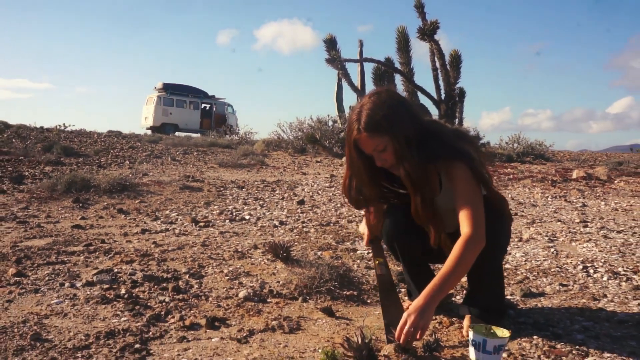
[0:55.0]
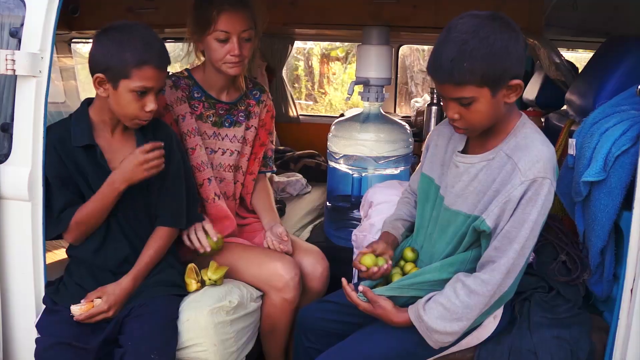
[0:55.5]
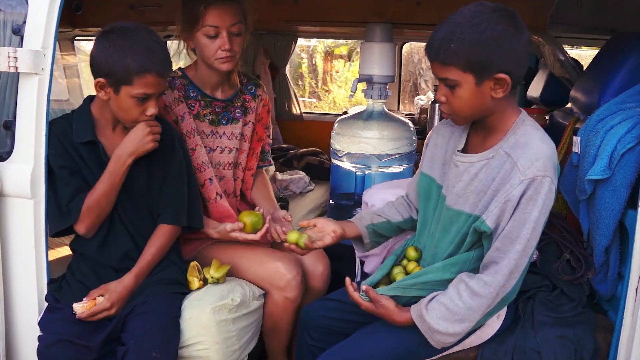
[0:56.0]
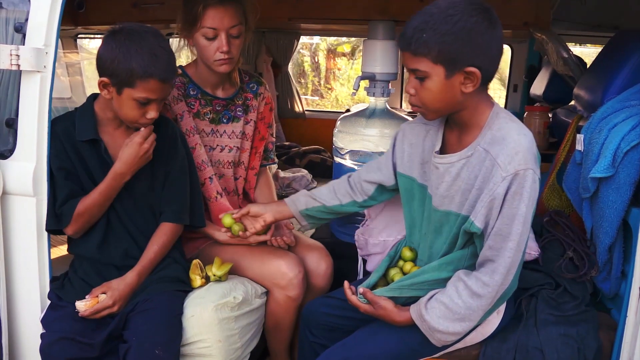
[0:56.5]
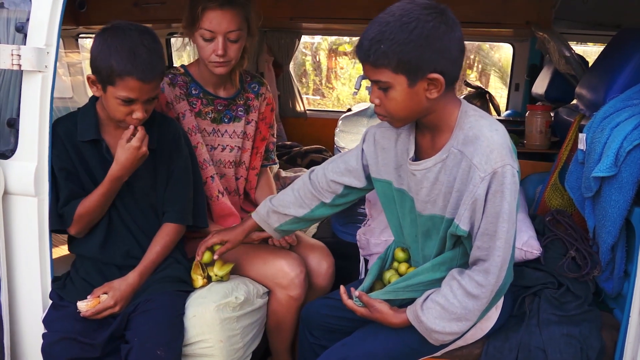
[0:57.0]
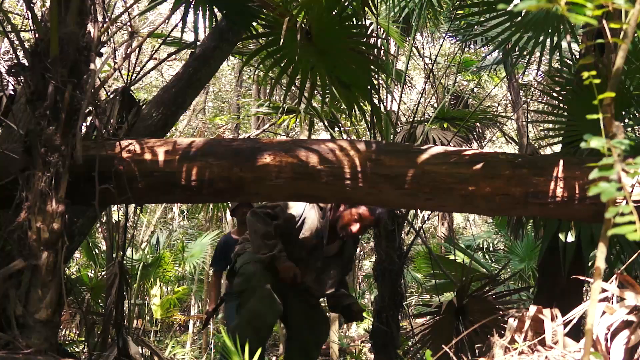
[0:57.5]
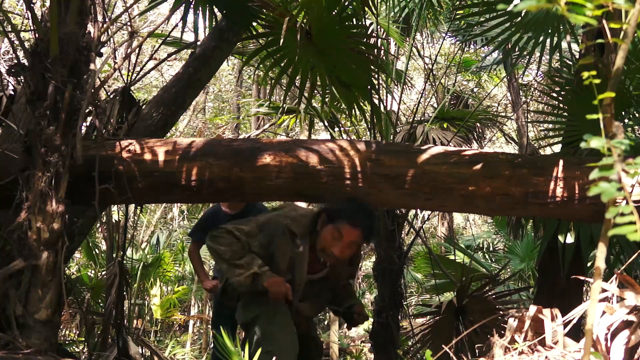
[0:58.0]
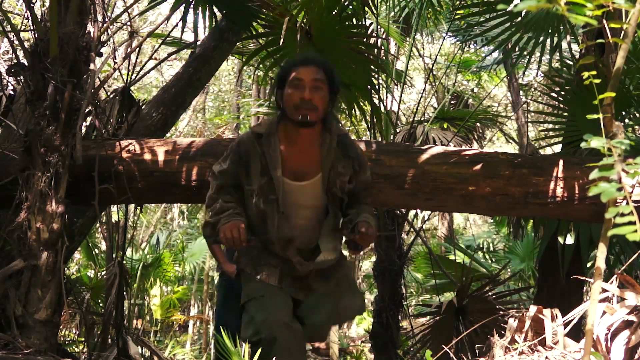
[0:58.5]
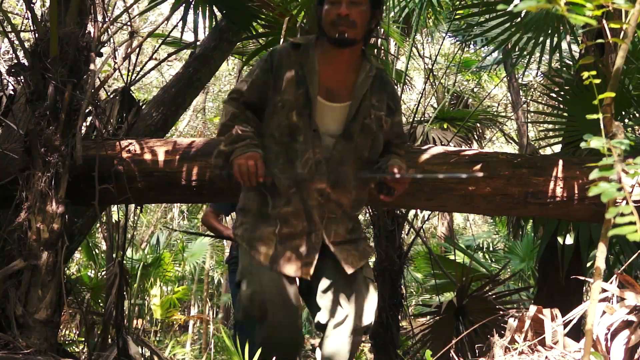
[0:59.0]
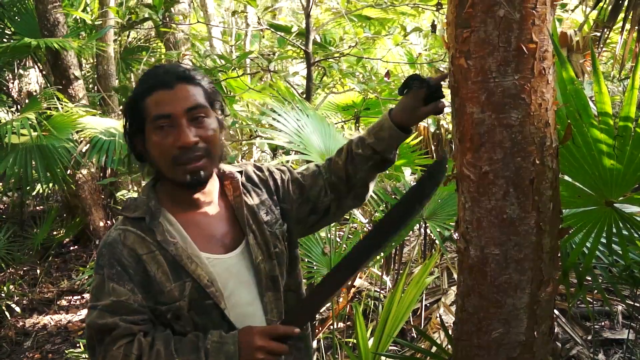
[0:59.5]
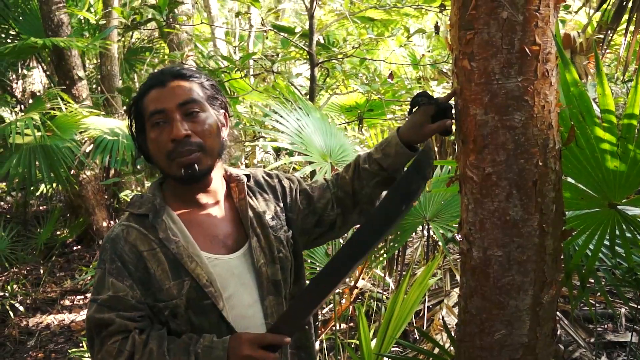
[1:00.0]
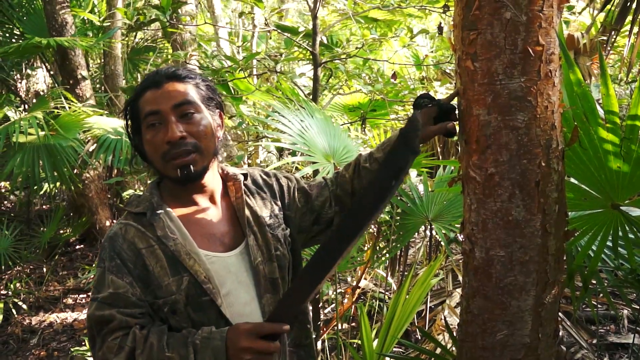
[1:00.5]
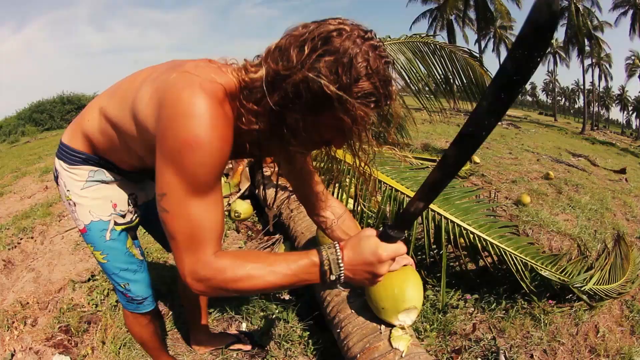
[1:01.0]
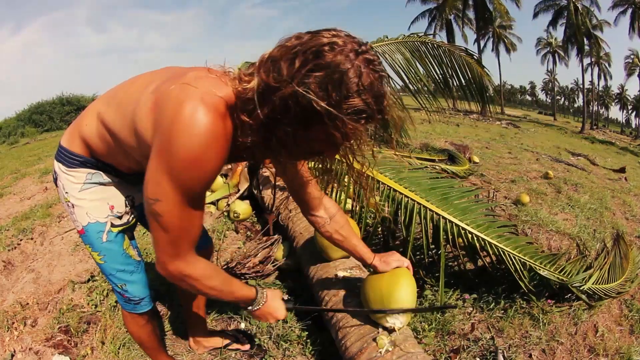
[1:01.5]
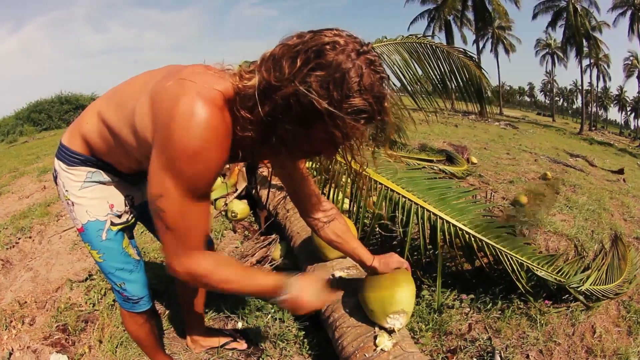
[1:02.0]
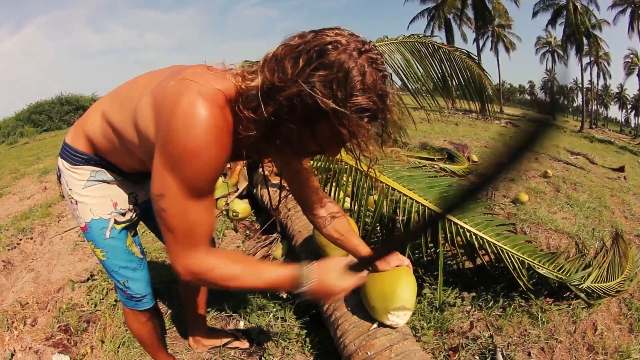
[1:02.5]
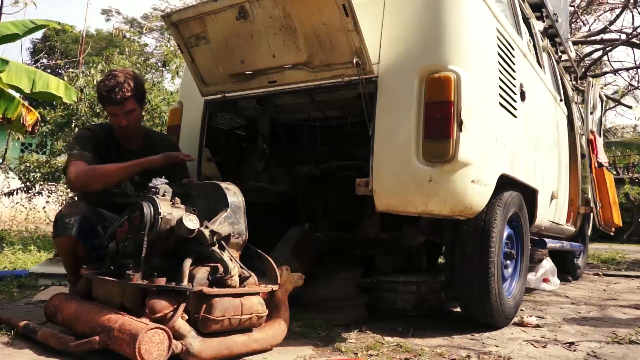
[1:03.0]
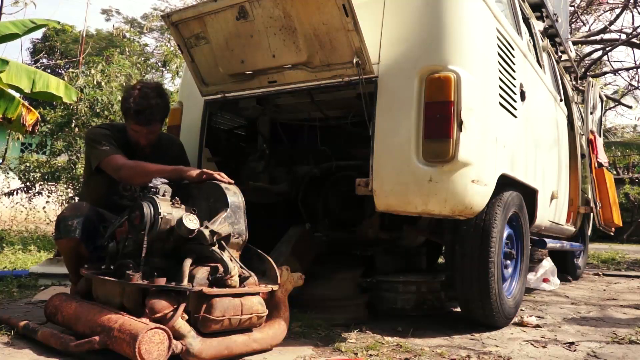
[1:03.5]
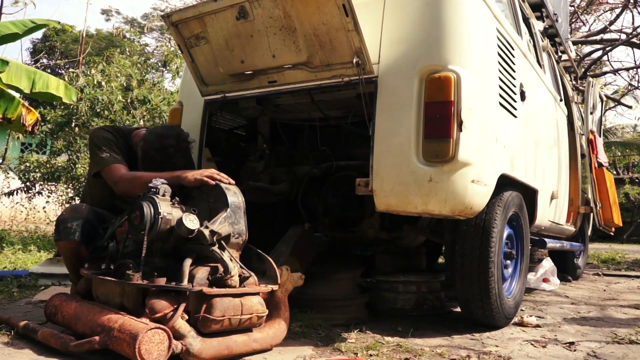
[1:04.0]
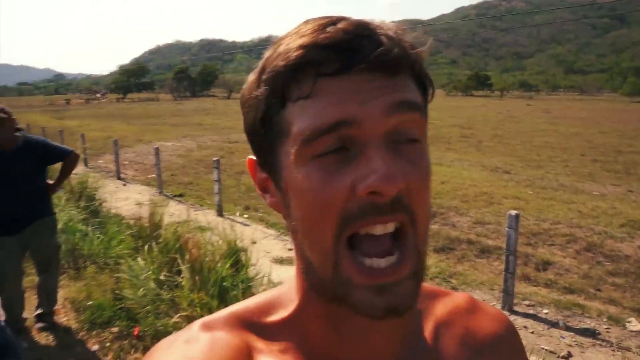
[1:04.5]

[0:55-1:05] They exchange things with little kids, who give them something that looks like little limes. In the rainforest, they hack at coconuts, cutting the end off a coconut. A man guides them, showing them how to get the coconuts, how to make their way through the jungle, and how to use a machete. They appear to have had van problems: the van engine looks ruined and is outside the van. It looks hot and sweaty, like they are in a South American jungle. The guy showing them the tree looks like he has been sleeping out there; he wears camouflage, has kind of shaggy hair, and there are things in his beard.